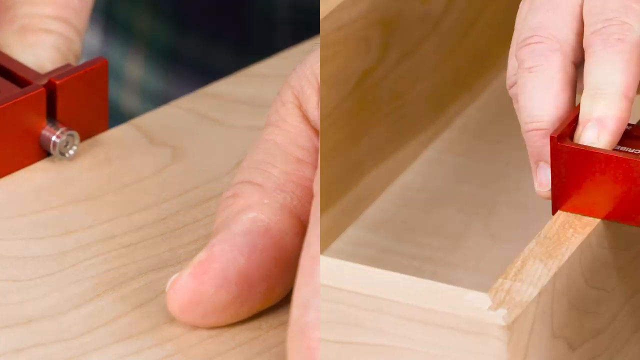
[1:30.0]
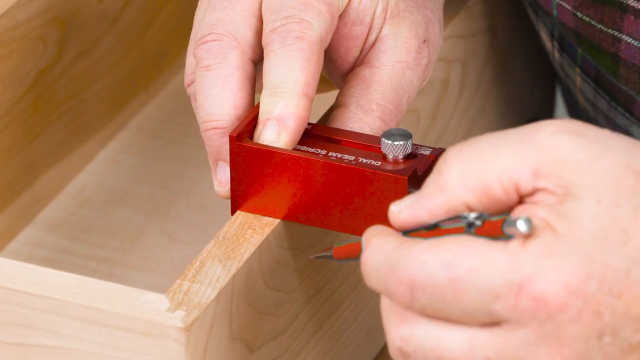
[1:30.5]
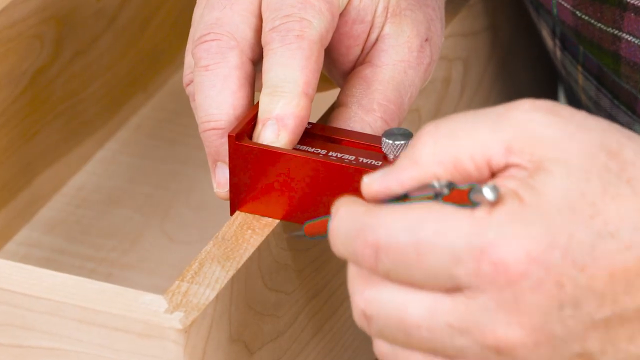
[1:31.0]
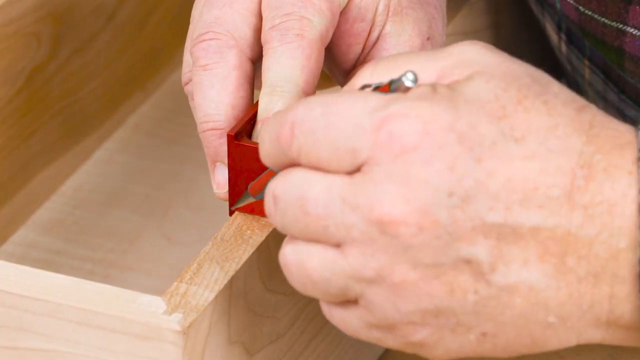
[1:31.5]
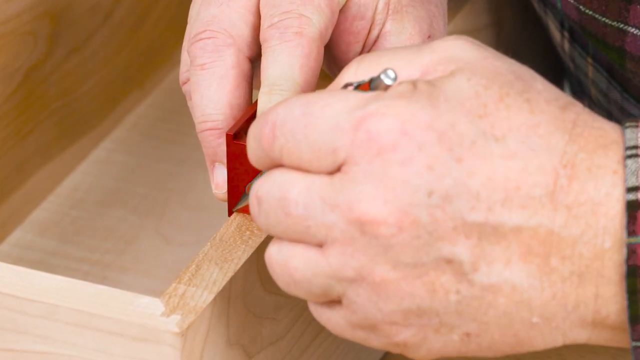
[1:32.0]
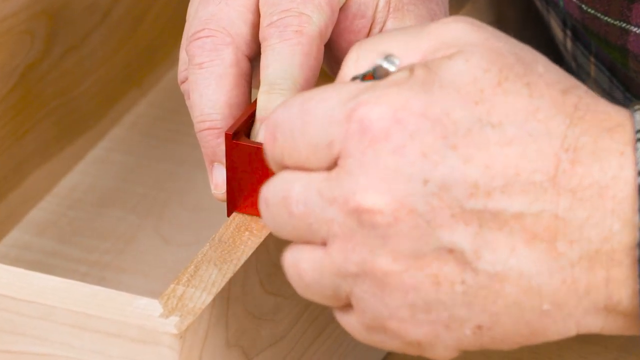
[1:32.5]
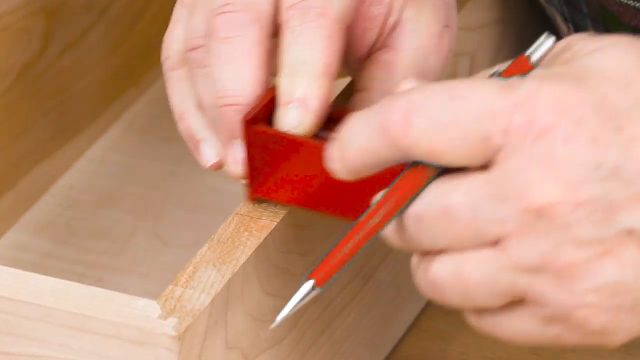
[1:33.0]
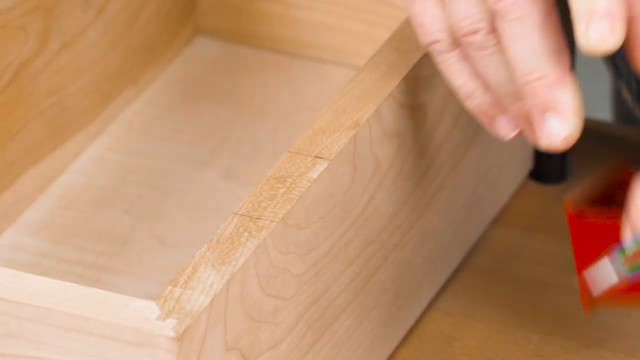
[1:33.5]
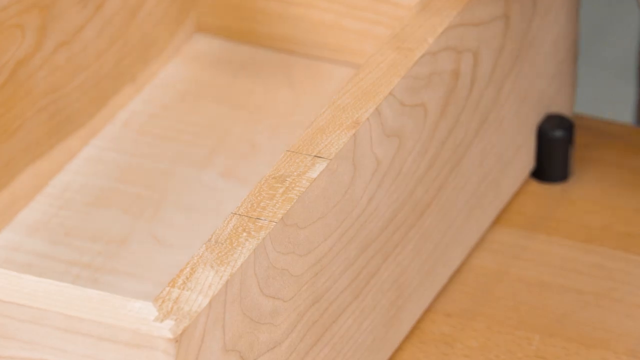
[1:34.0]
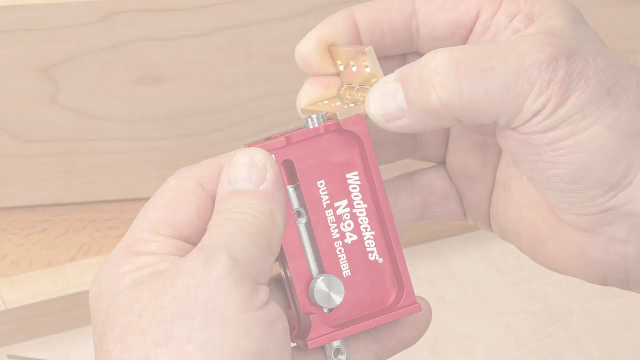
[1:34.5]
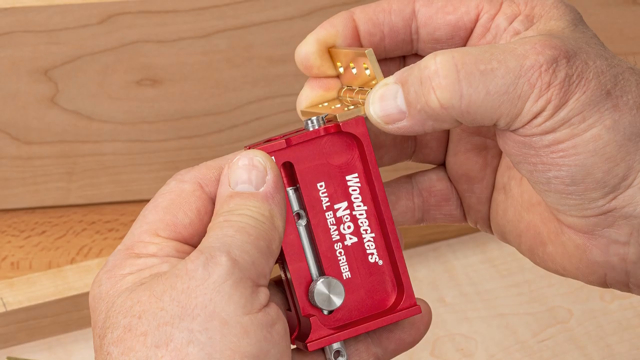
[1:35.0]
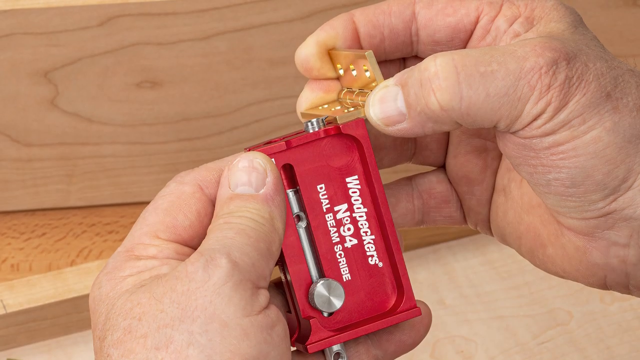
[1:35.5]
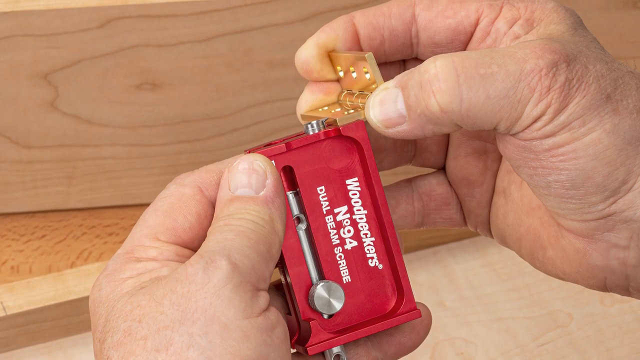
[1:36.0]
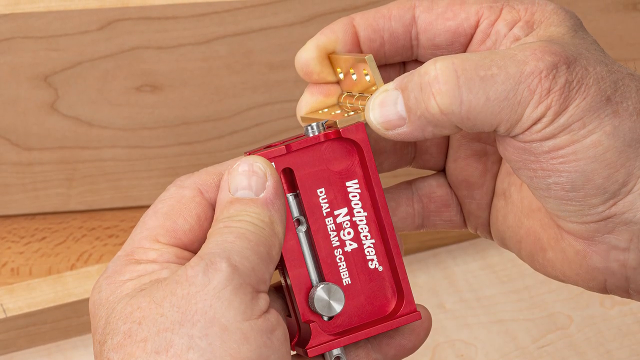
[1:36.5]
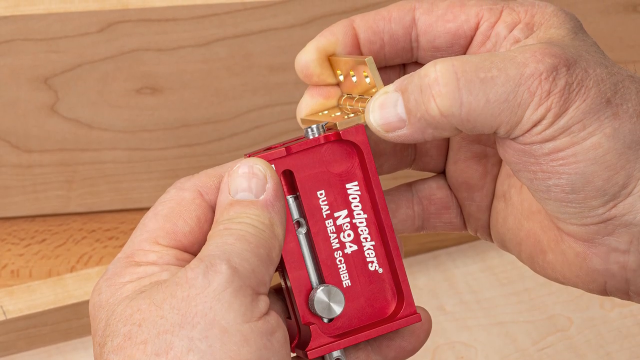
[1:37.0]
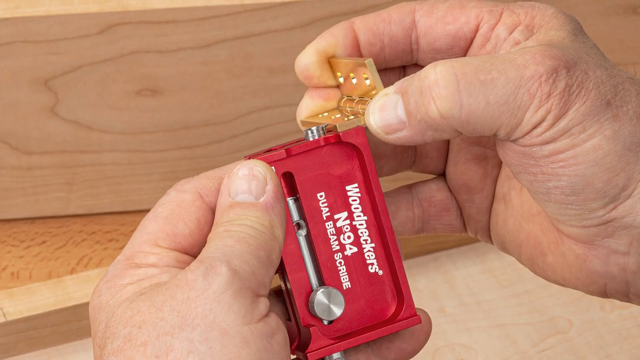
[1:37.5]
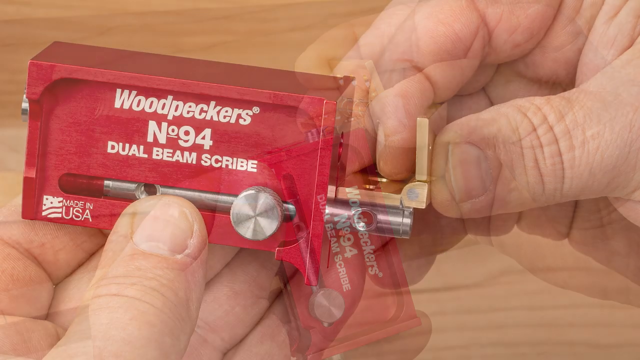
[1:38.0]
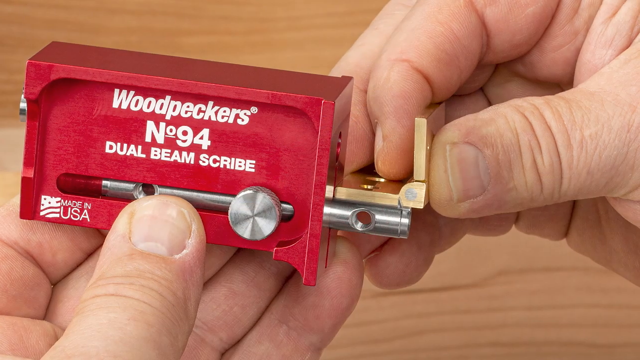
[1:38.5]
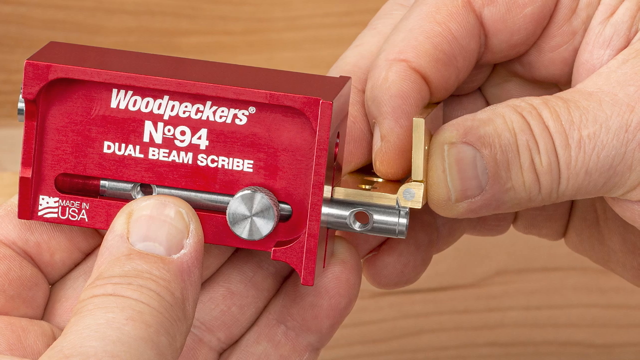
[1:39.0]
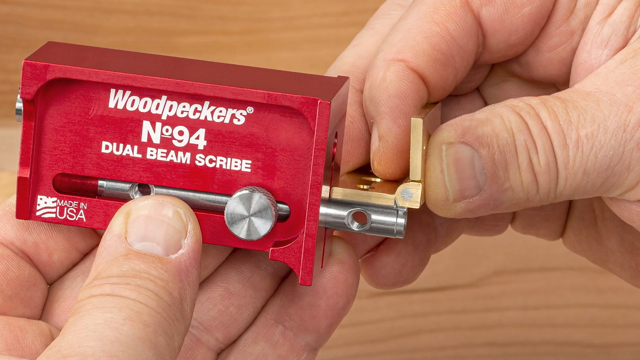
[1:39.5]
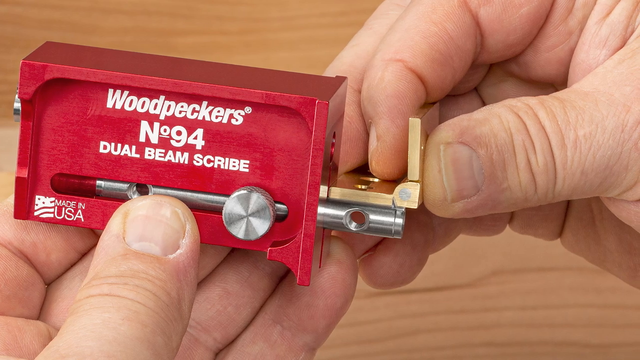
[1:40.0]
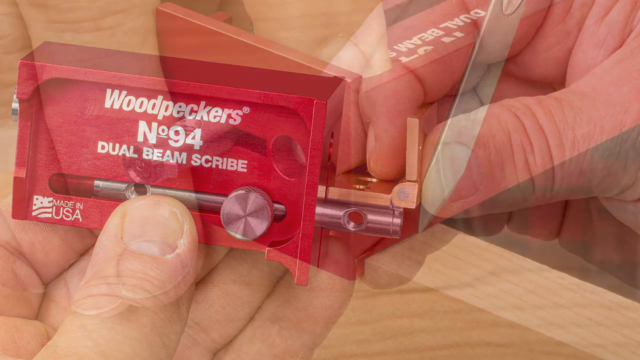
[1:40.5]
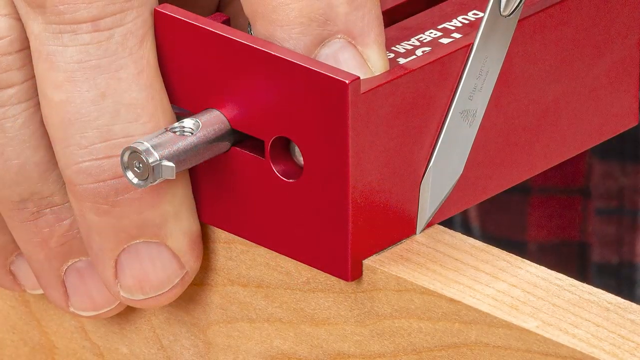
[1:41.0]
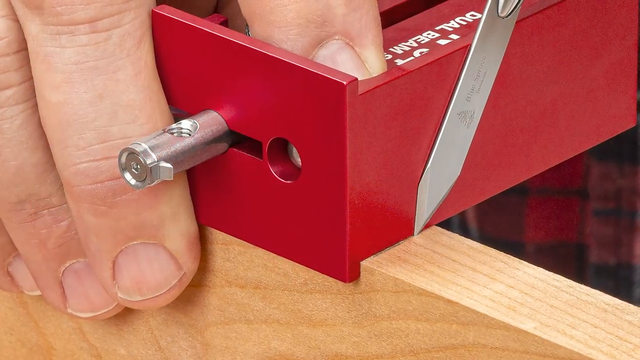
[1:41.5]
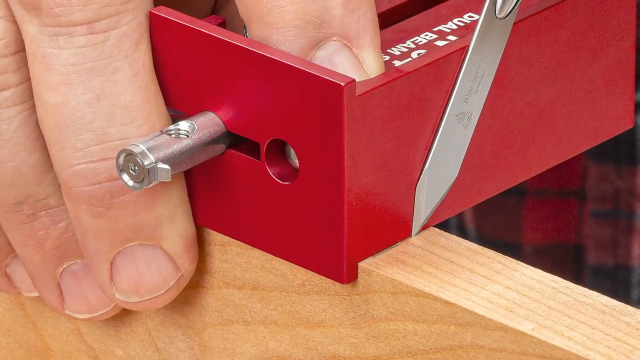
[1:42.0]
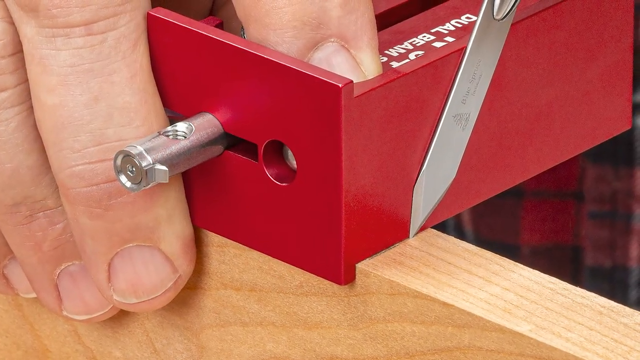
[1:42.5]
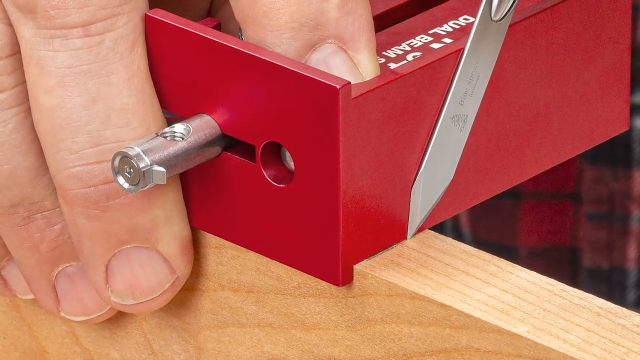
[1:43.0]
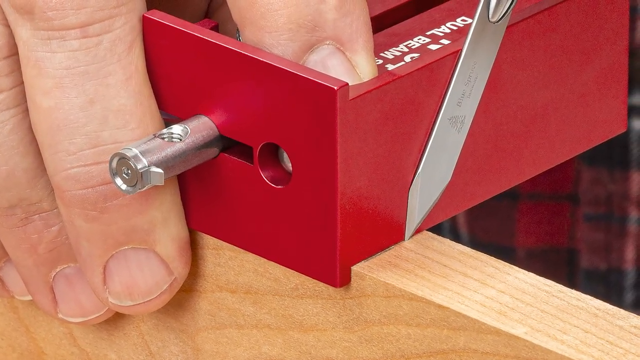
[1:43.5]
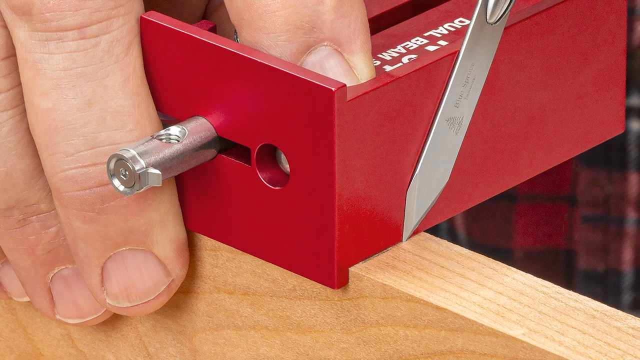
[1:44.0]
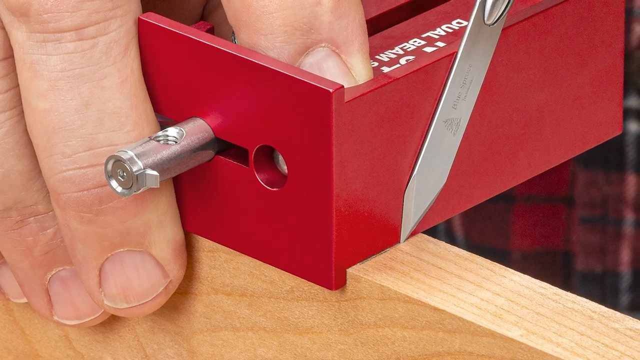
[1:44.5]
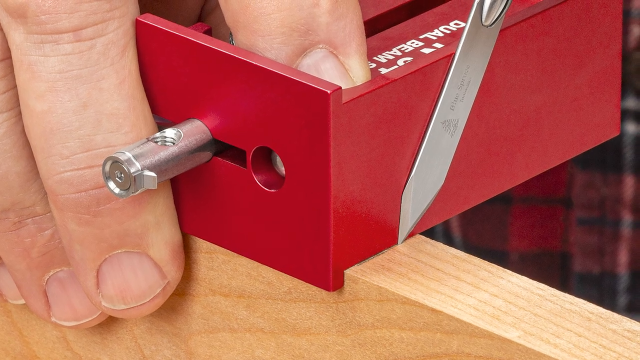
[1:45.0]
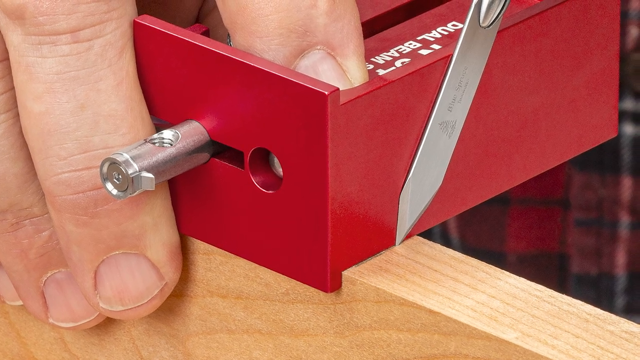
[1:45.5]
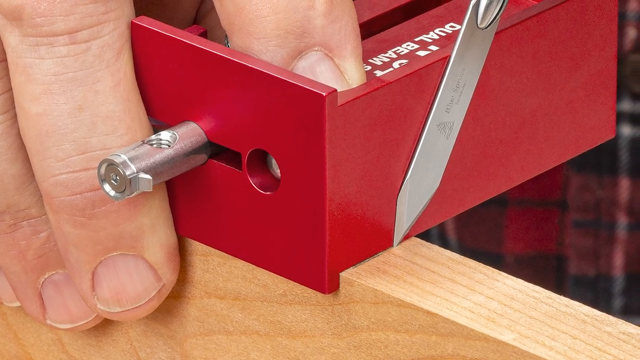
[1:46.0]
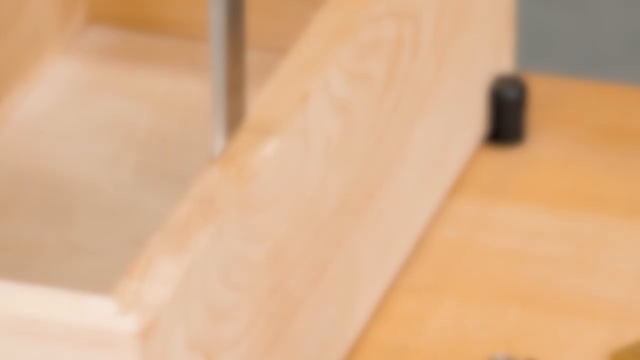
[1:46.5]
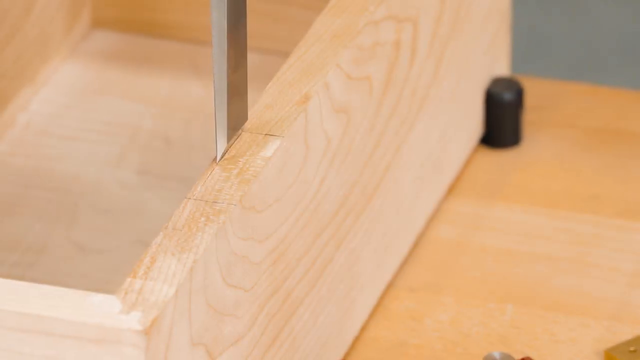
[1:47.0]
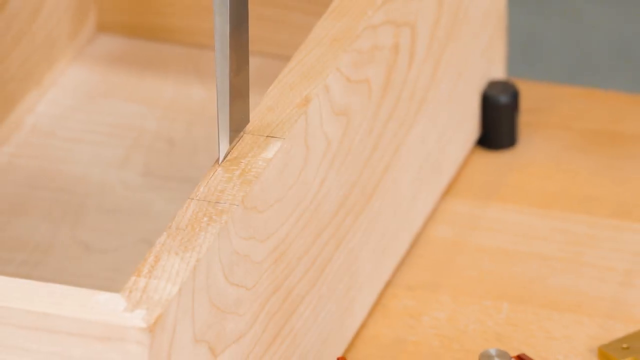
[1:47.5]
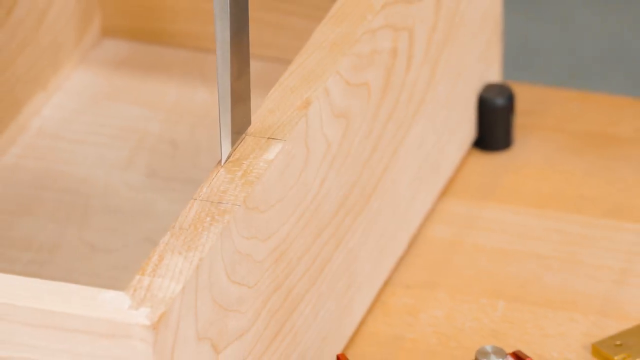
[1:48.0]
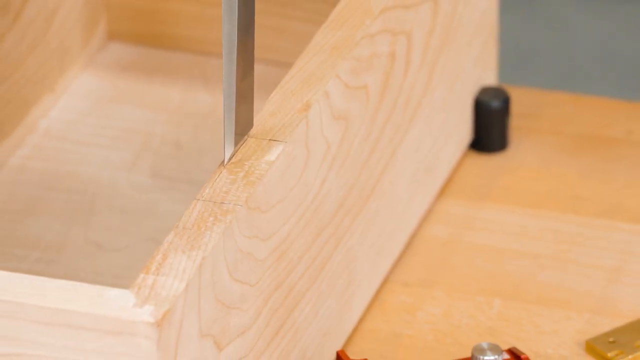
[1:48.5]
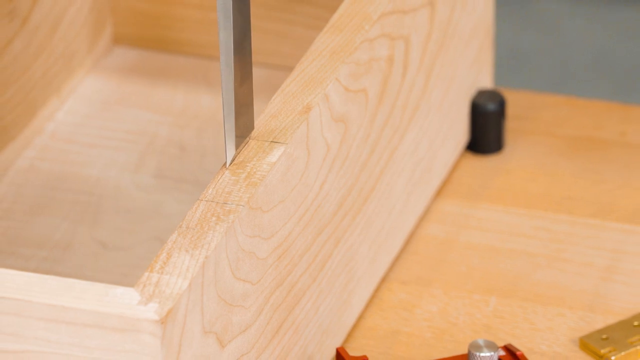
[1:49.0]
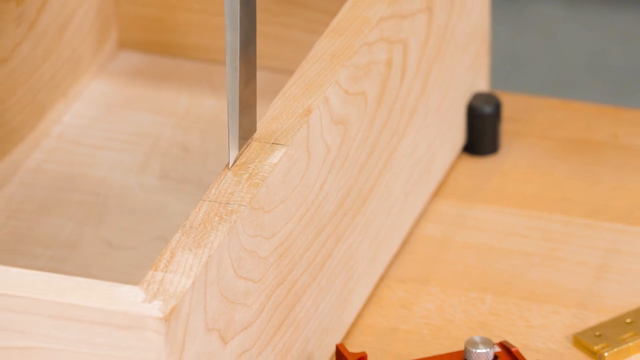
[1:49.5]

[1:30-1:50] The man pops out part of the tool, measures, and marks the wood, using the tool rather than the hinge. He then pops the tool out to the width or height of the side of the hinge, does the same on the other side, puts it against the wood, and carves a little with a kind of awl.